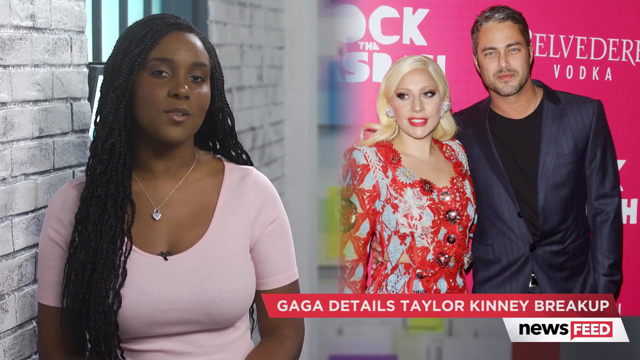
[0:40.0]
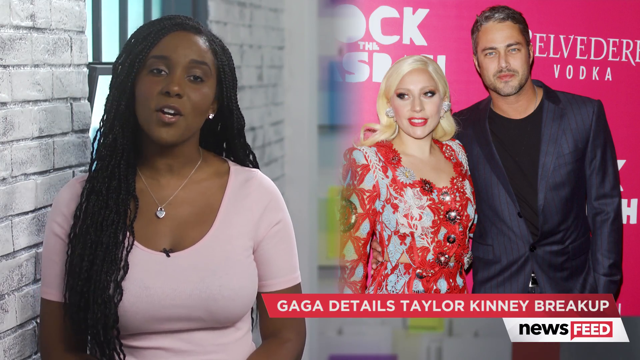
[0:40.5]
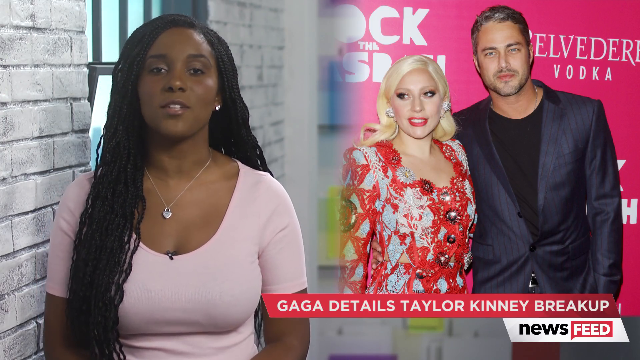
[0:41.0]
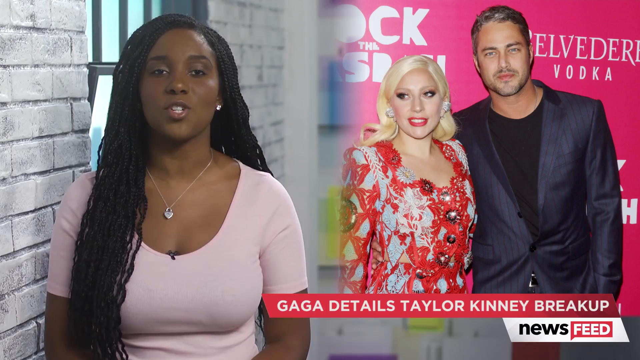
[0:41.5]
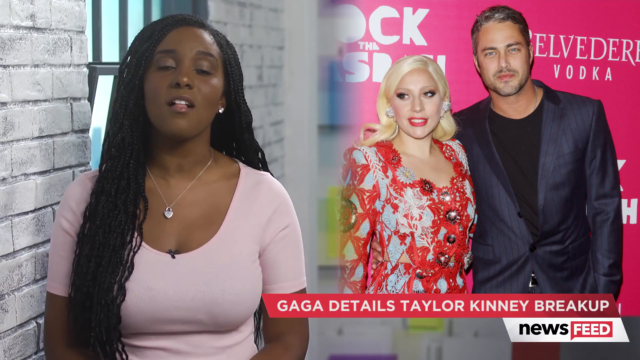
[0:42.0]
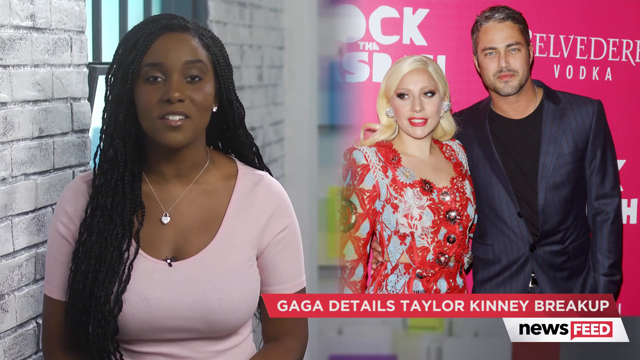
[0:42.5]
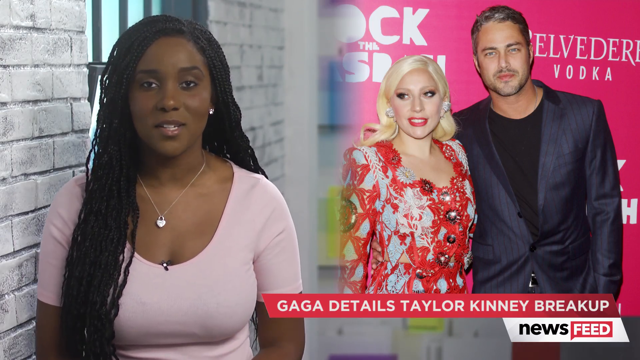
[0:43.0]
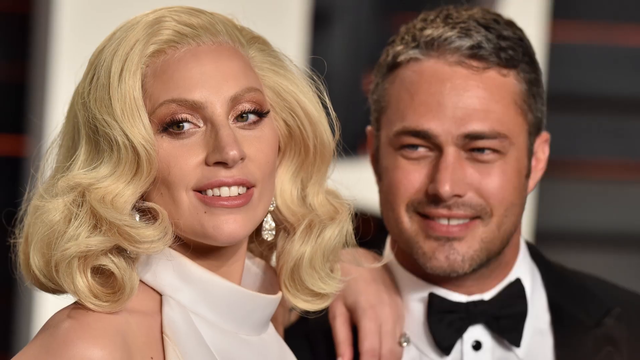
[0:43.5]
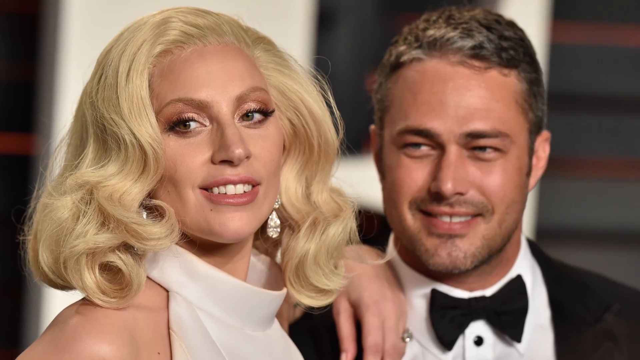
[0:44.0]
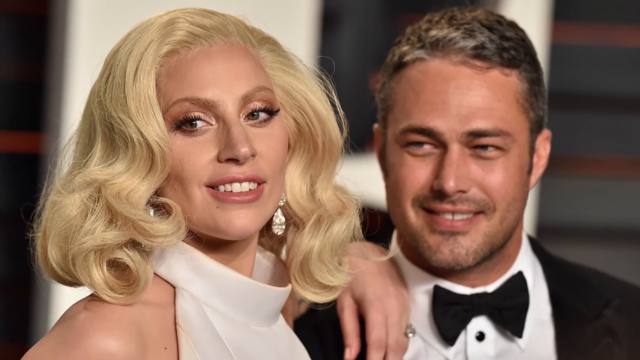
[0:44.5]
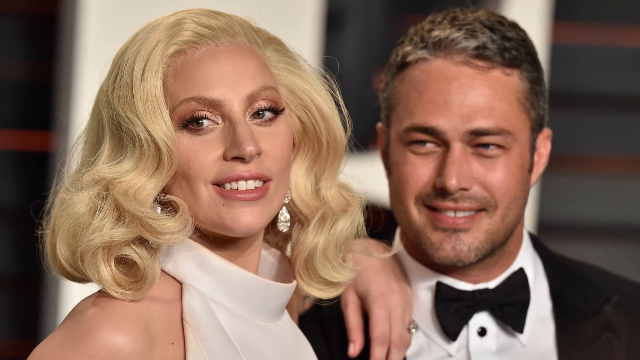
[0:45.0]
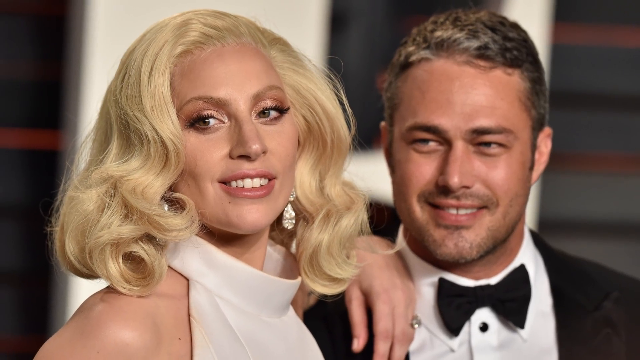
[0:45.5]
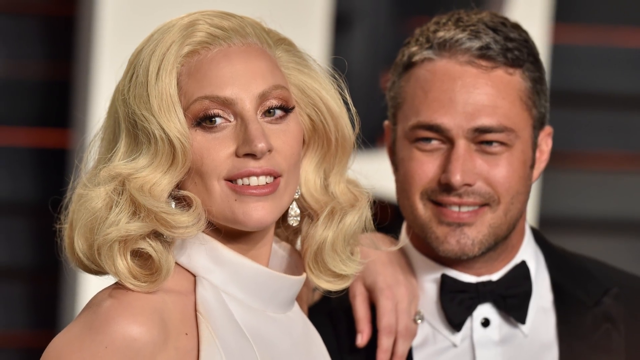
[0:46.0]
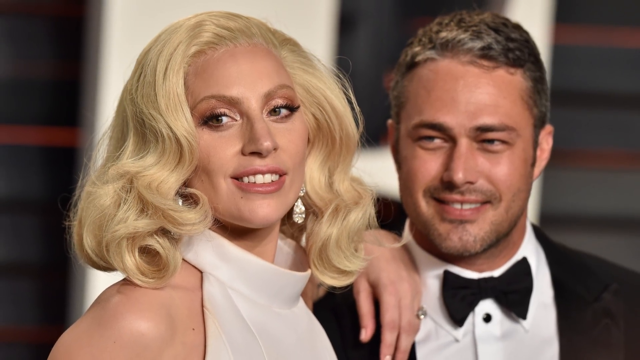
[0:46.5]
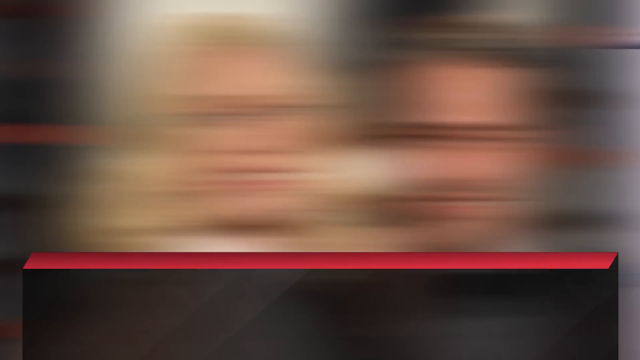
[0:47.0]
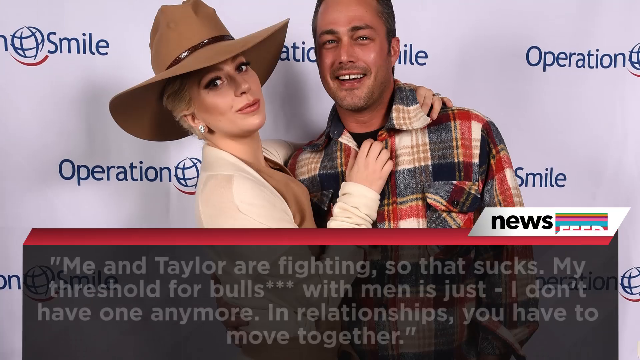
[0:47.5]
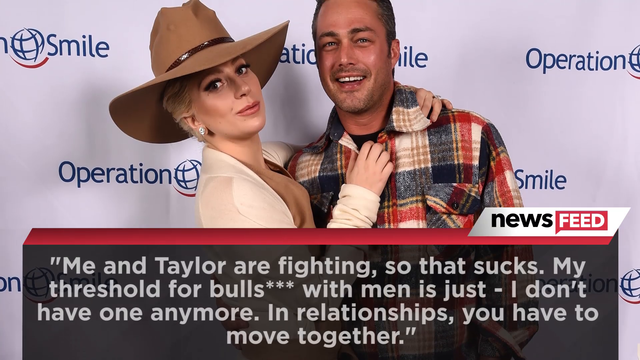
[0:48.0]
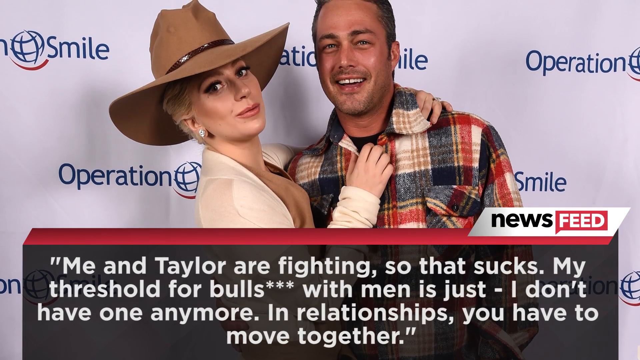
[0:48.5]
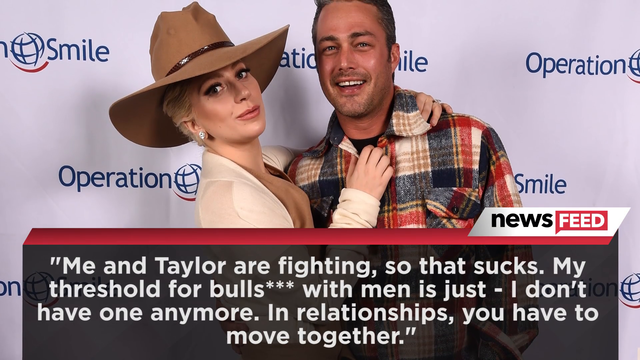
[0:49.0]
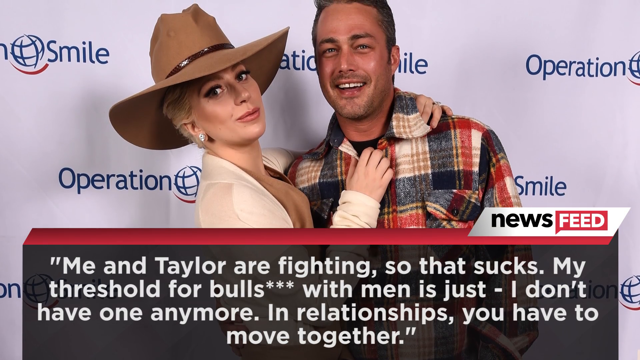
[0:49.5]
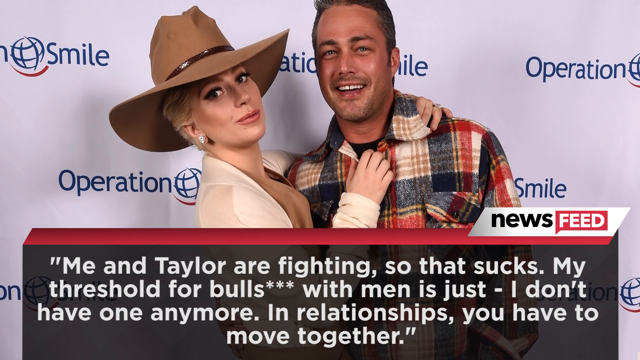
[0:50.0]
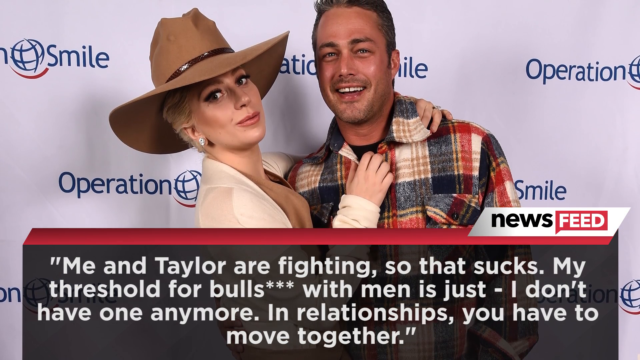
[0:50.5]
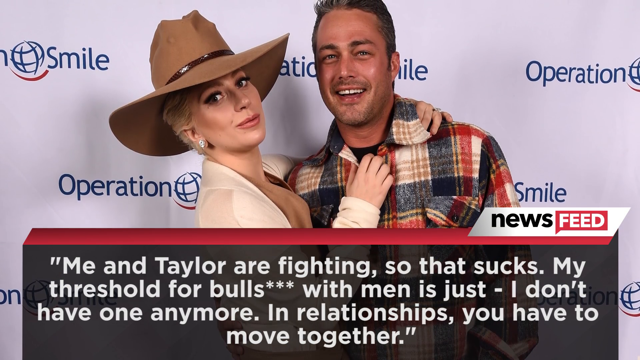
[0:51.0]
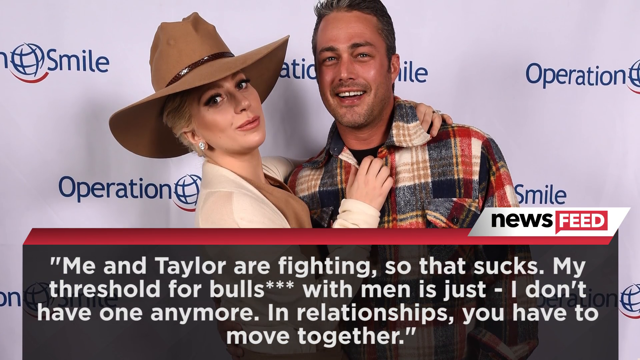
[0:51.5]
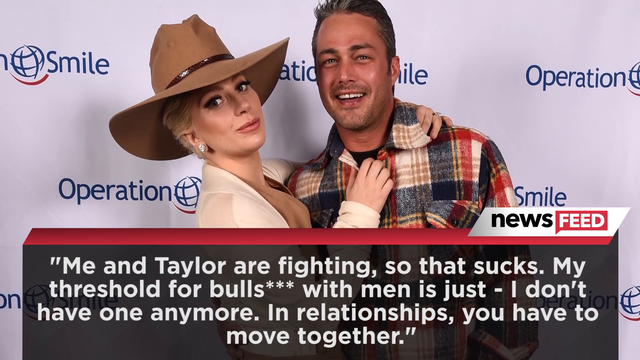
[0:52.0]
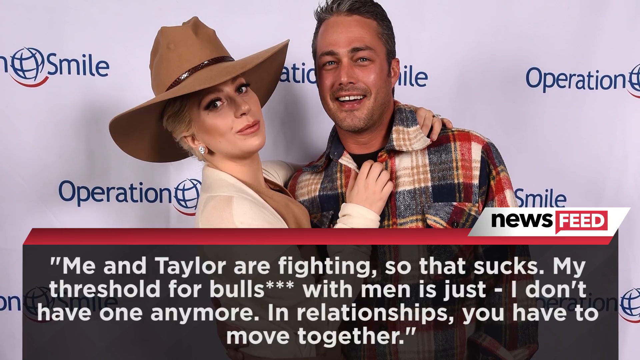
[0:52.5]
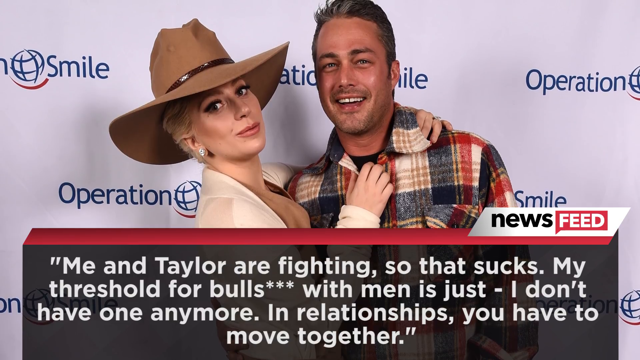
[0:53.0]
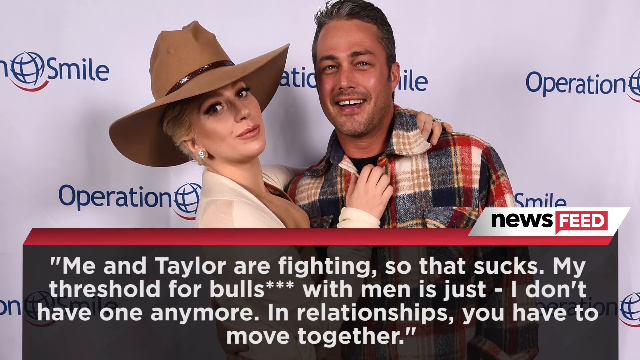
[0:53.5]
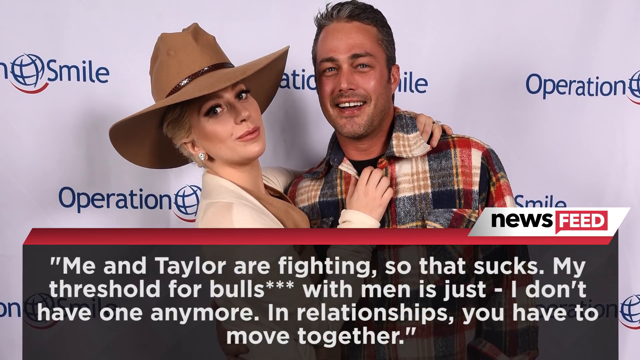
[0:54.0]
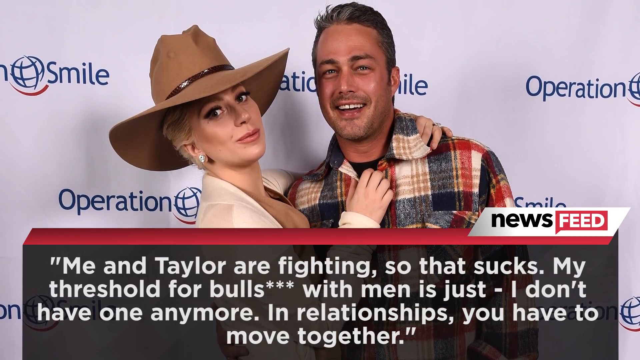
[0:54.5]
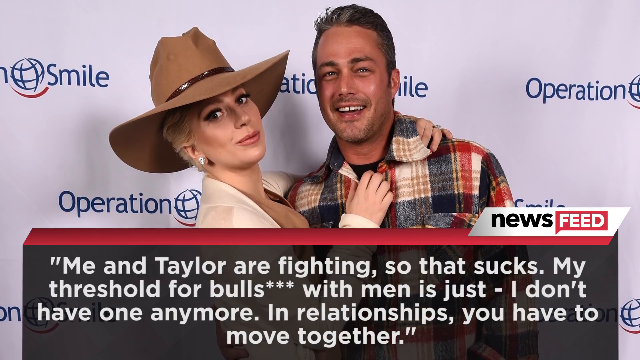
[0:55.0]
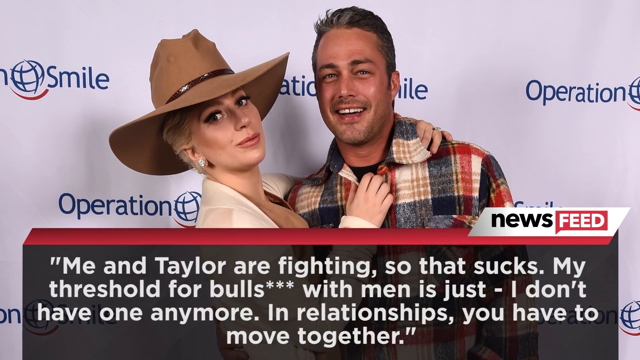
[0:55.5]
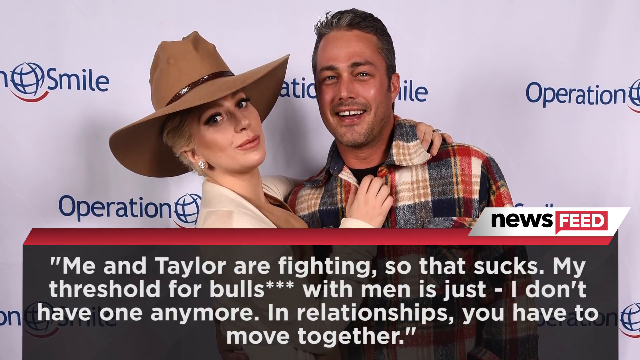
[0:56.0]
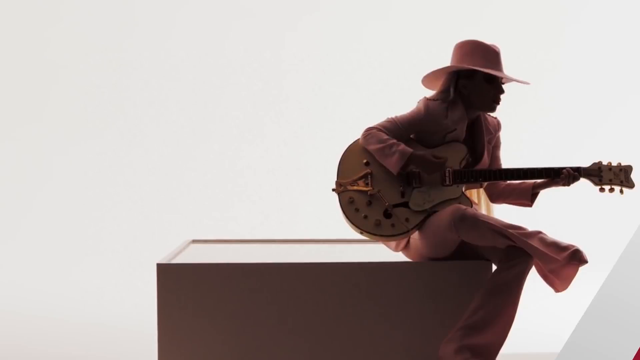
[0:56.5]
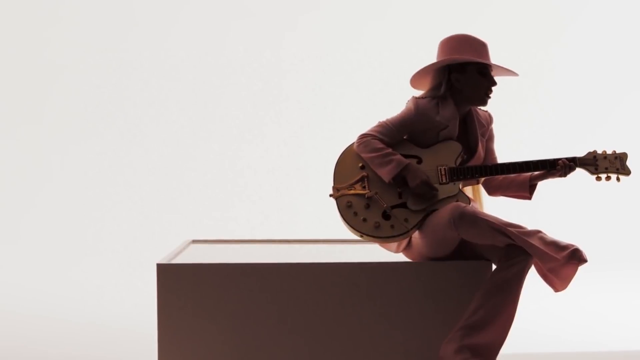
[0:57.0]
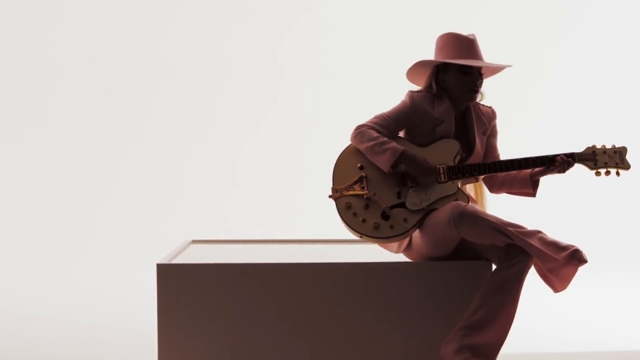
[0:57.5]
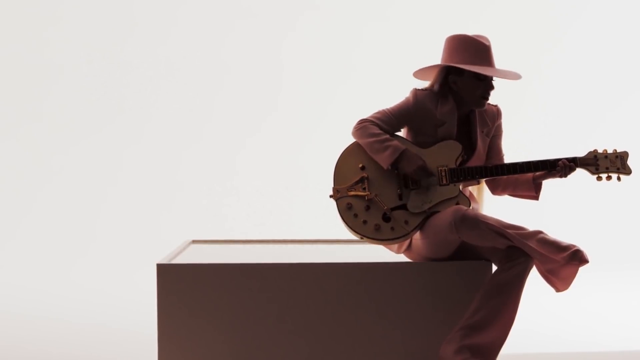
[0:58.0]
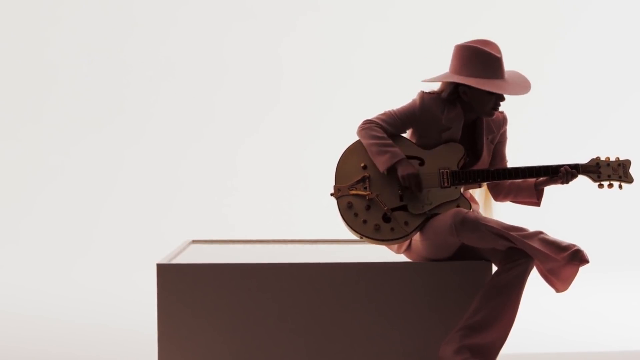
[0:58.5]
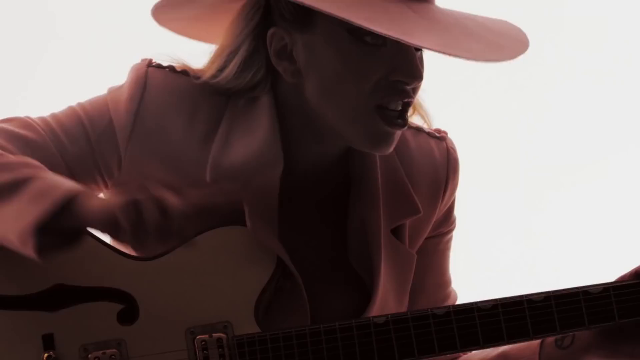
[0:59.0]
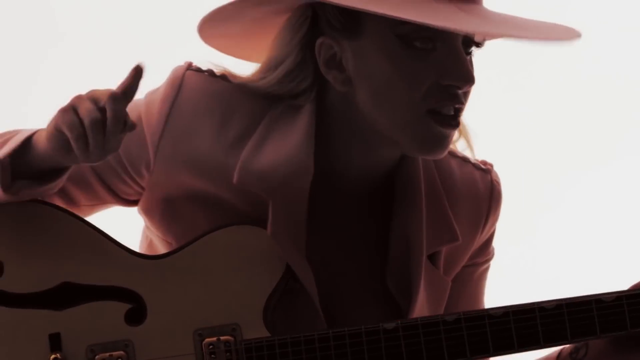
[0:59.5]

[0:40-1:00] A new segment features the hostess standing on the left side of the shot. She is African-American, with long braided black hair, and wears a pink top that exposes some cleavage, along with a necklace that has a small lock at the end. She stands right next to a wall of white bricks, and behind her is a window with black bars. To her right is an image of Lady Gaga next to a man who appears to be Kinney, in front of a pink wall full of logos for various companies. Lady Gaga wears an extravagant outfit with red and white all over, while the man wears a simpler outfit: a suit with a black shirt underneath. Below them is a small banner reading "Gaga Details-Taylor-Kinney breakup".